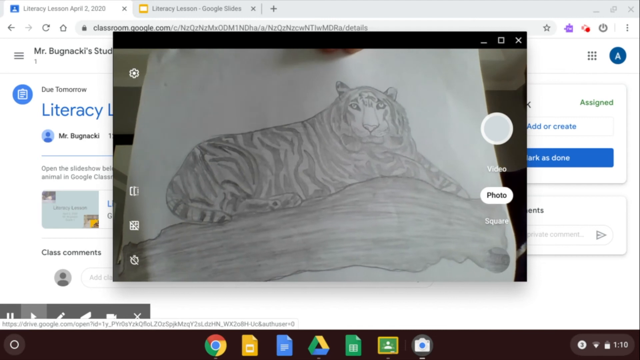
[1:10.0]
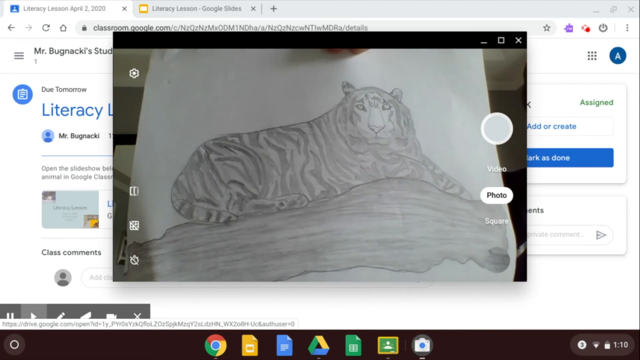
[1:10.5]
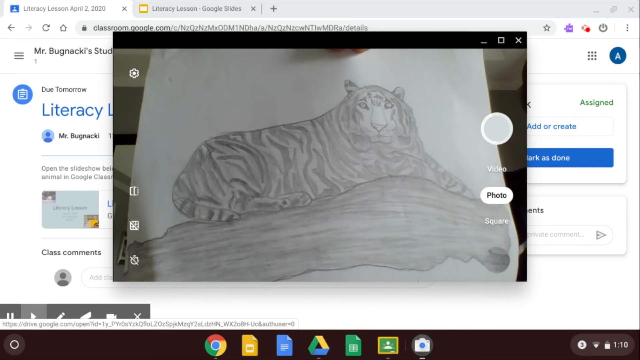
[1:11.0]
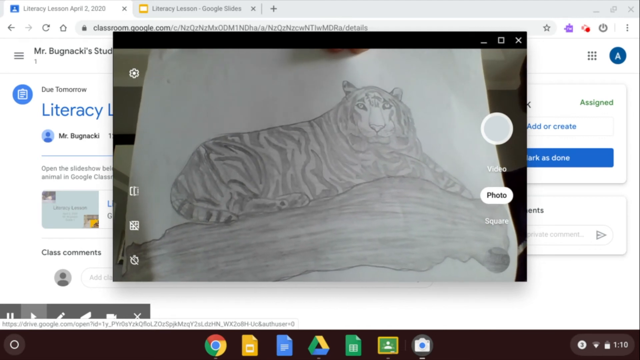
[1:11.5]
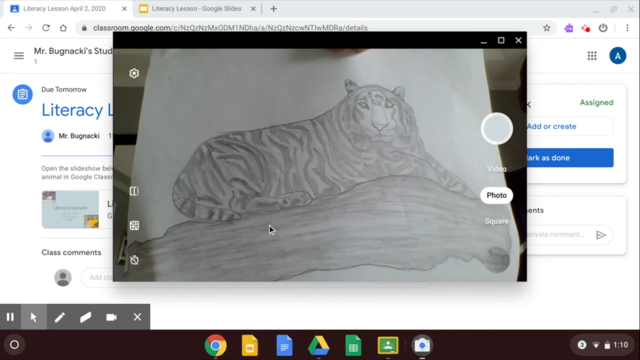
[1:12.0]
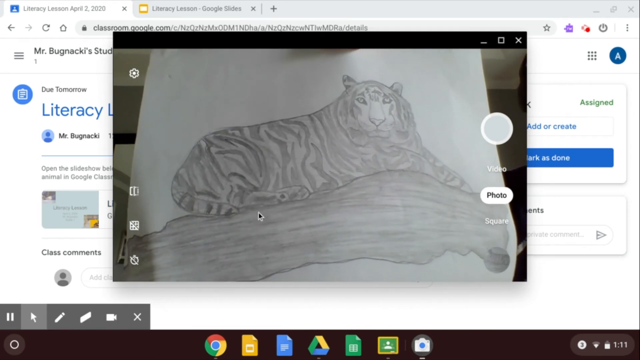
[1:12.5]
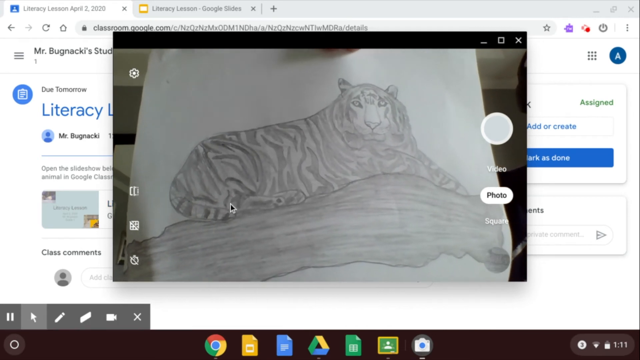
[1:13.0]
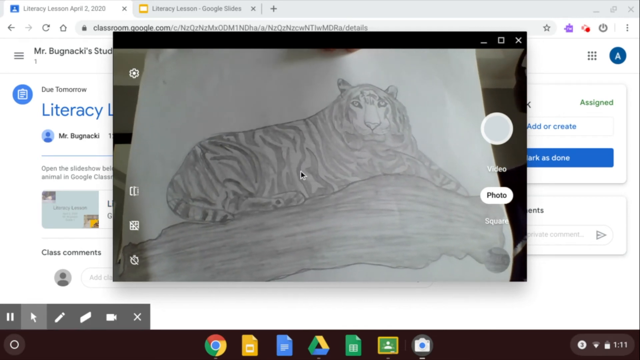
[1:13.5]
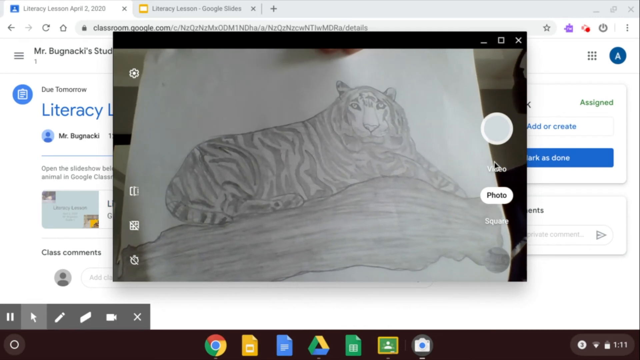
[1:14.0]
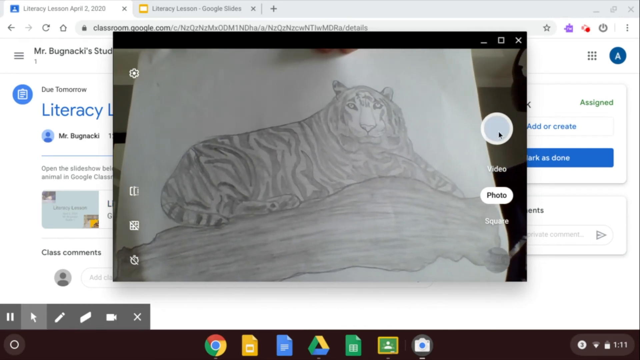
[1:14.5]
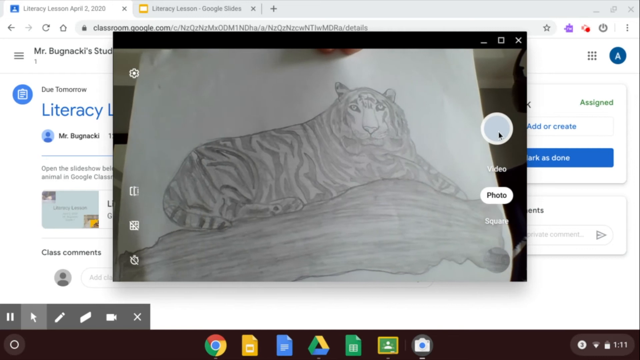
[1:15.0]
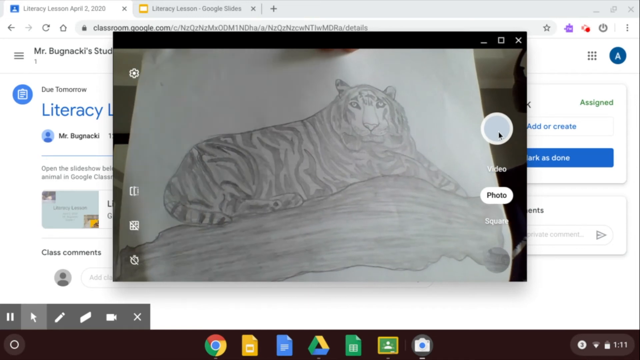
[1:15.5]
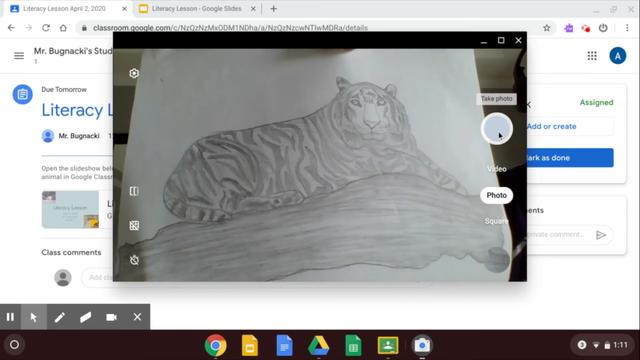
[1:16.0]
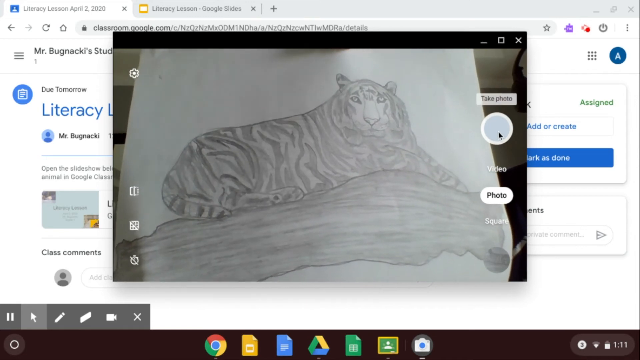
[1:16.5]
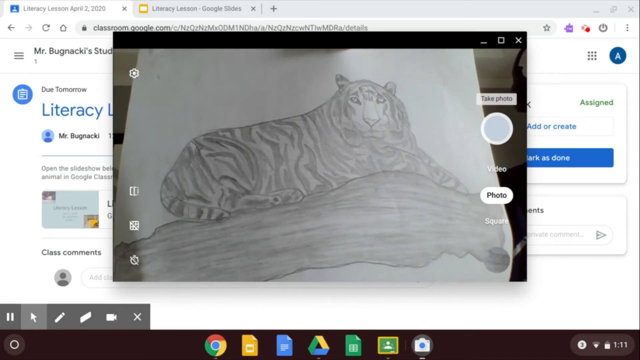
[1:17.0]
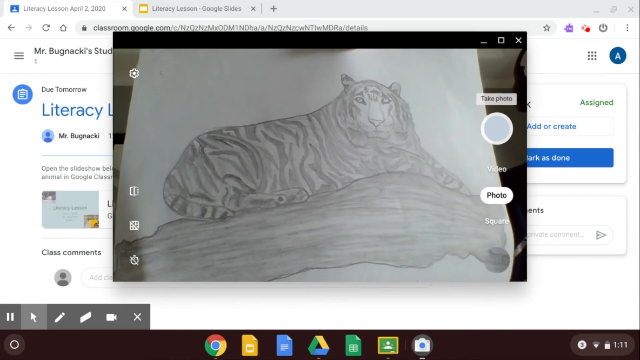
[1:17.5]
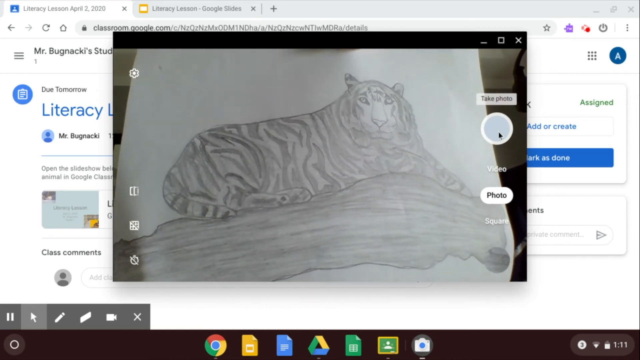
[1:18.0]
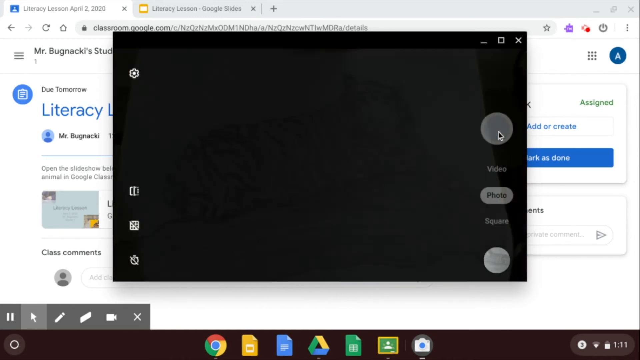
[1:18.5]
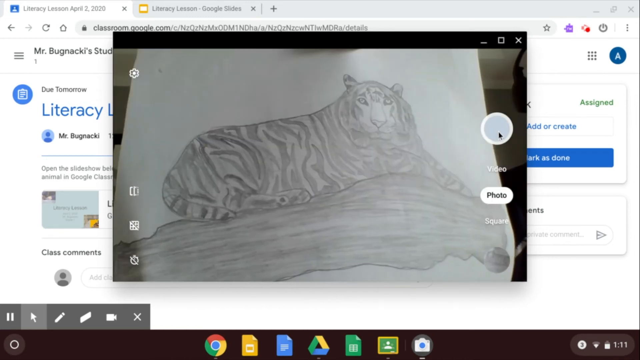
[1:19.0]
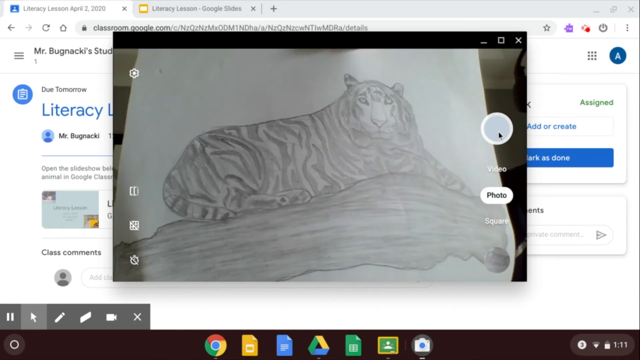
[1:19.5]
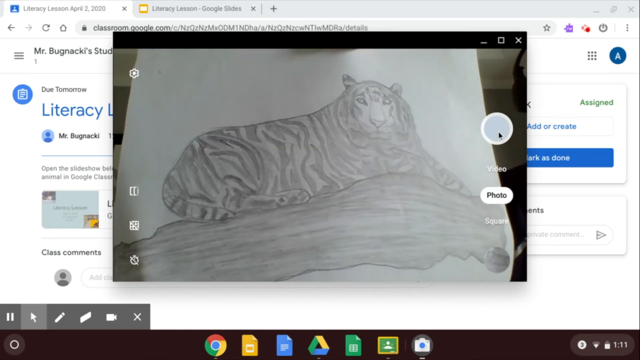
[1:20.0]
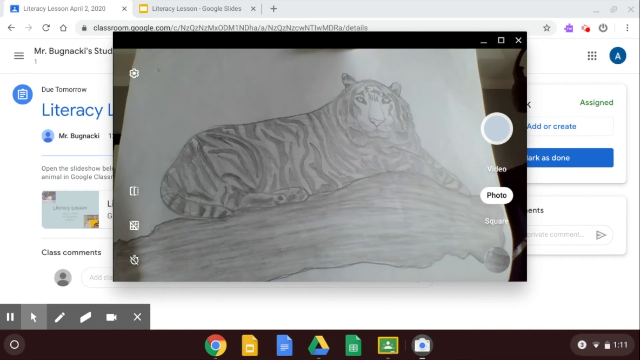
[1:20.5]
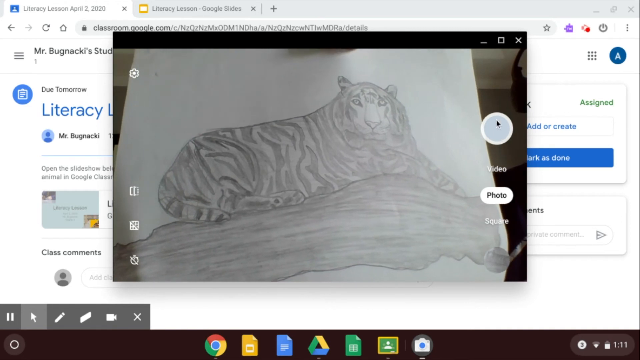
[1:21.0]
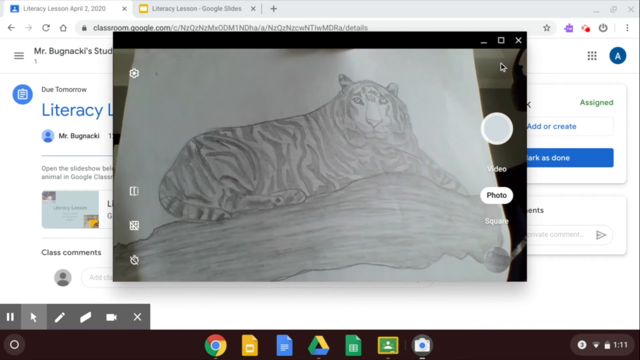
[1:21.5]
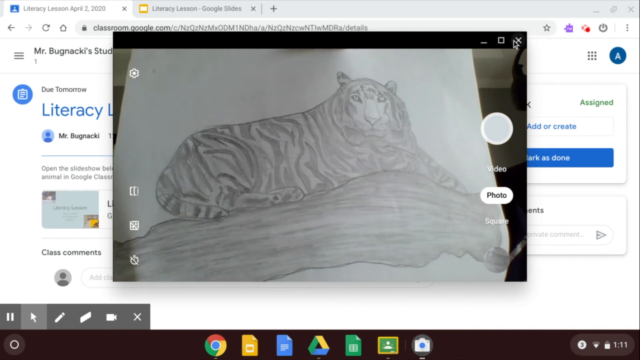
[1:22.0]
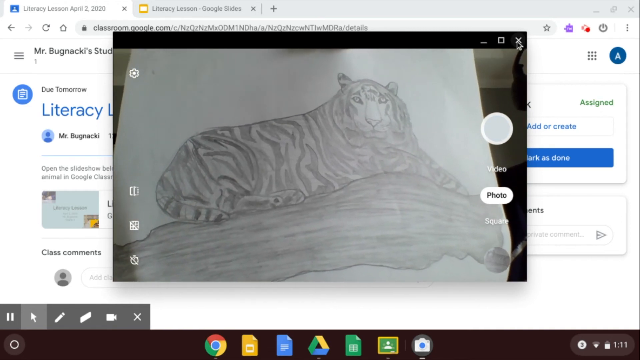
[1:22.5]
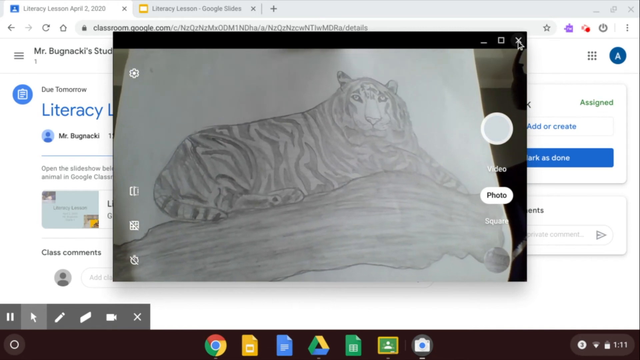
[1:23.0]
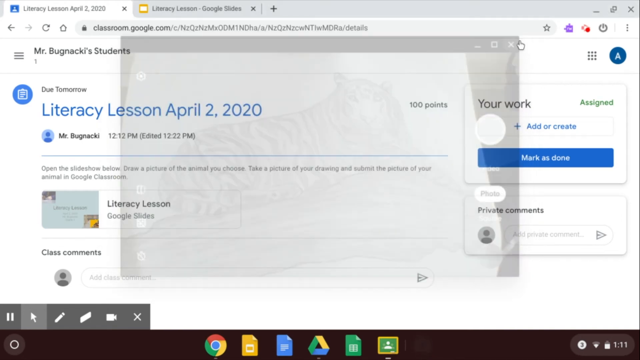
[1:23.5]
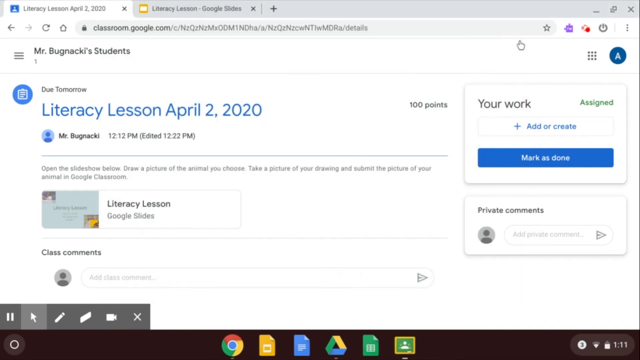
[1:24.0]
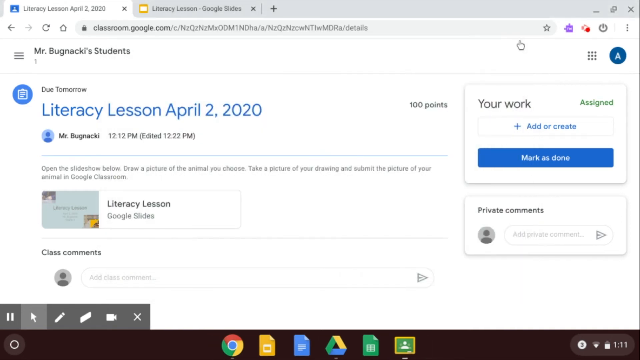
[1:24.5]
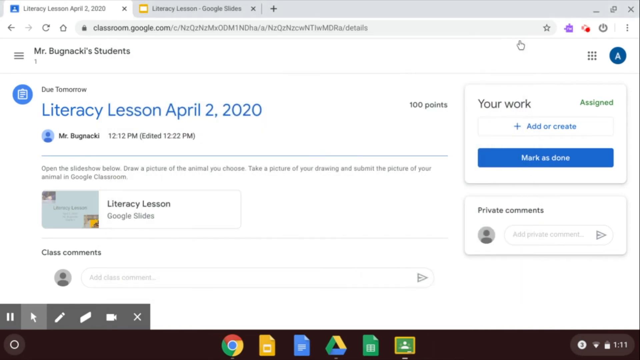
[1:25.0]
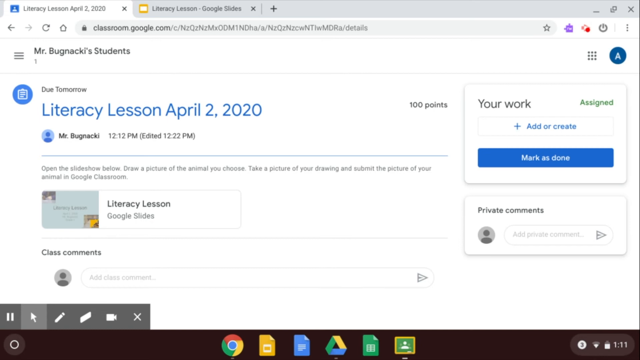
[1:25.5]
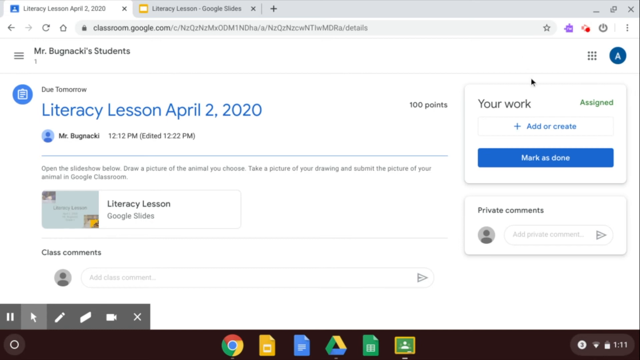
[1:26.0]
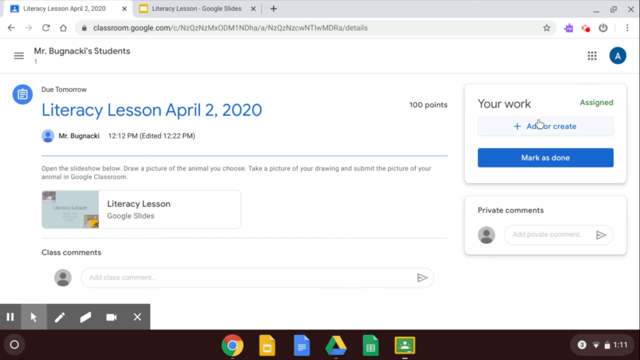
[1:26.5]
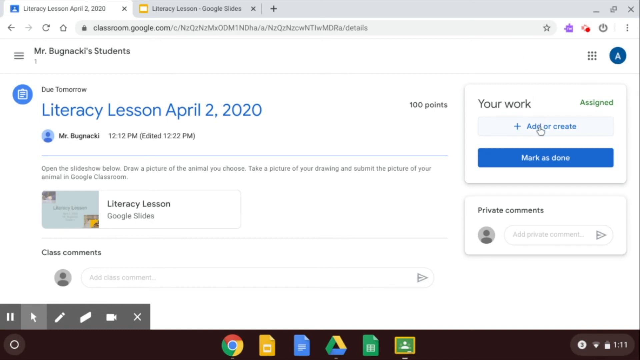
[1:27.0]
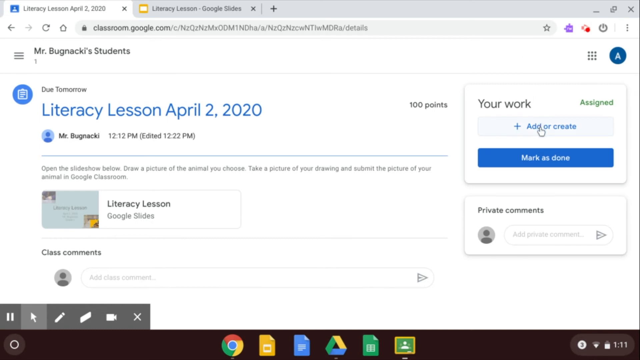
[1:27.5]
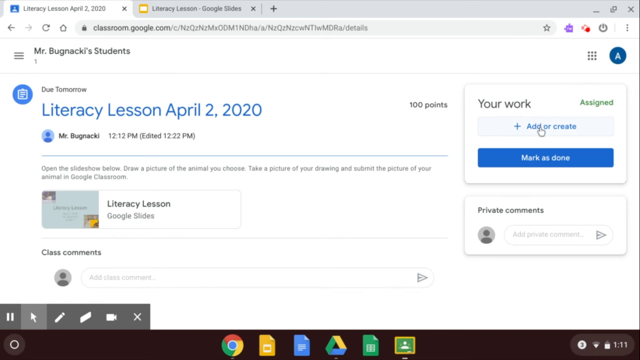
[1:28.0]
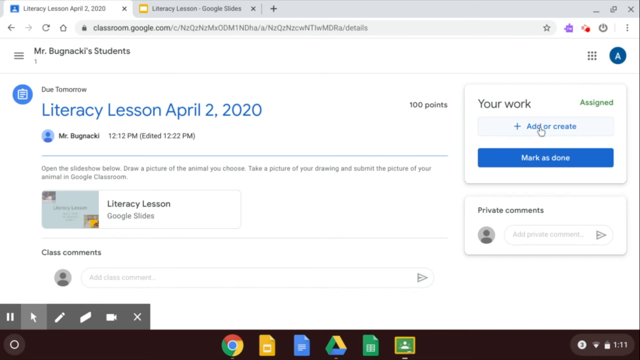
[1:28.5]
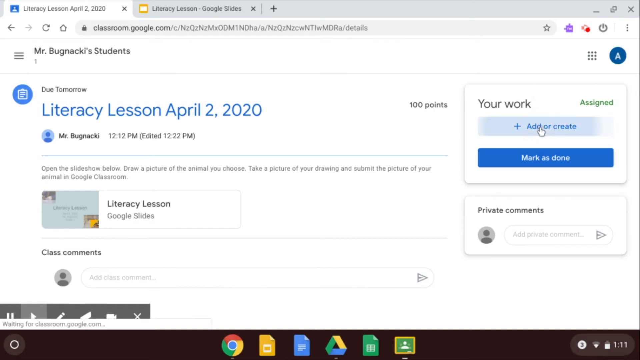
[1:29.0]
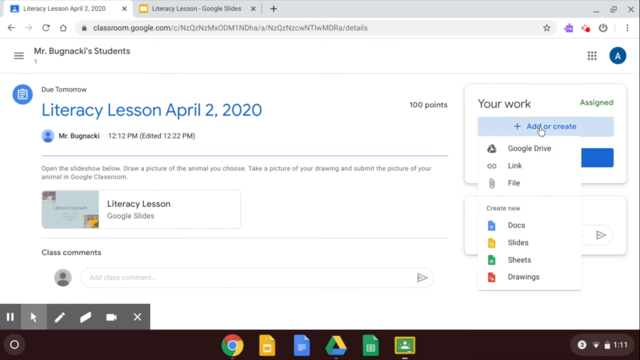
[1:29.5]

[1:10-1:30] The demonstration turns to using the camera on the Chromebook. The demonstrator clicks on the search tab, searches for the camera icon, and clicks on it to switch it on. A picture of a tiger is then put in front of the camera, and the demonstrator clicks to start taking pictures of the tiger. After taking a picture, the demonstrator shows how to save it on the Chromebook and then closes the camera tab. In the bottom far right of the screen, the time reads 1.10 in white, with a battery level icon next to it and a Wi-Fi icon just beside that.